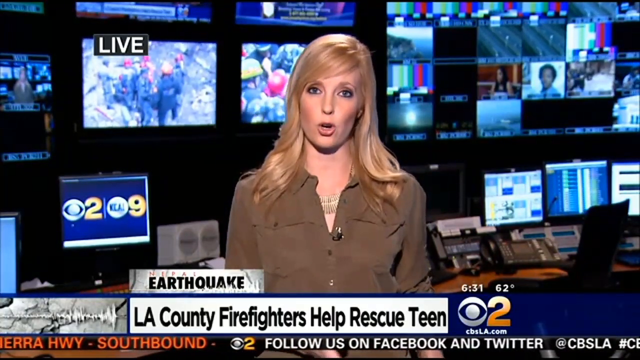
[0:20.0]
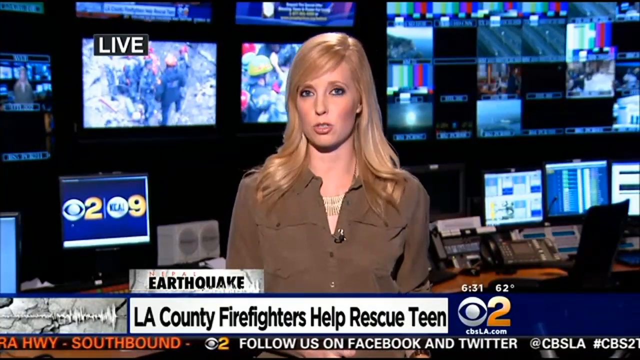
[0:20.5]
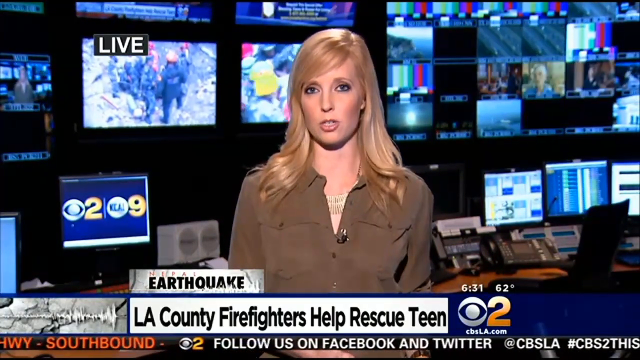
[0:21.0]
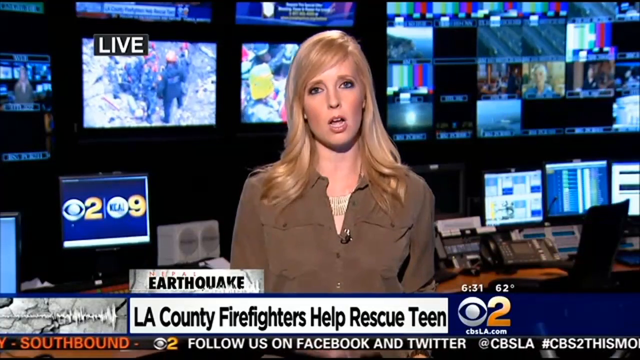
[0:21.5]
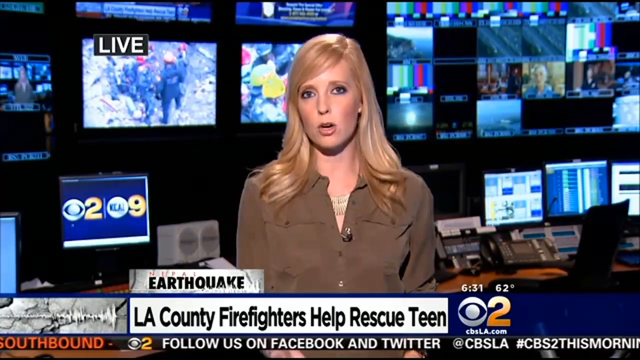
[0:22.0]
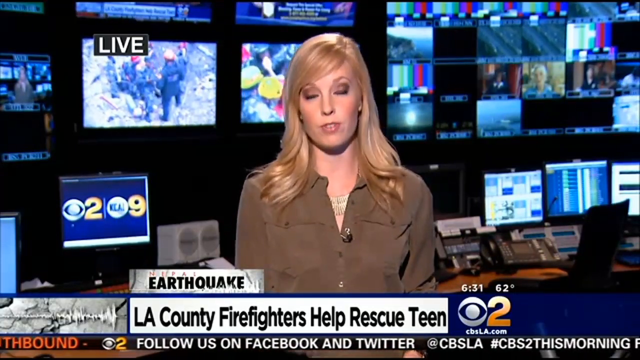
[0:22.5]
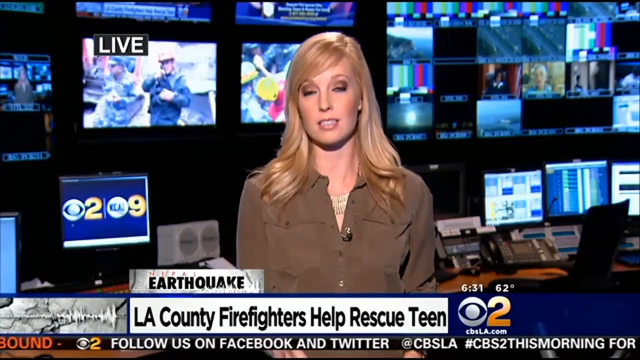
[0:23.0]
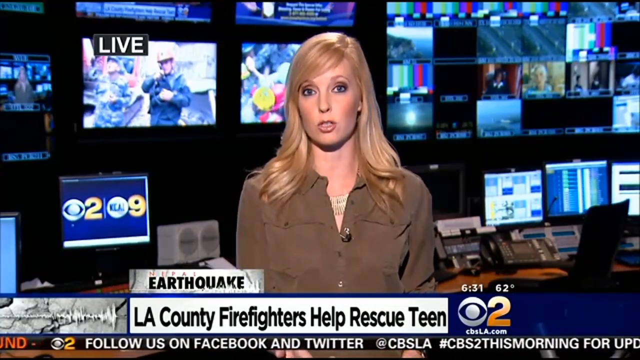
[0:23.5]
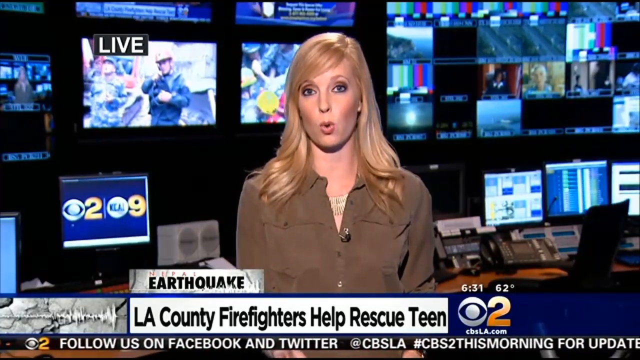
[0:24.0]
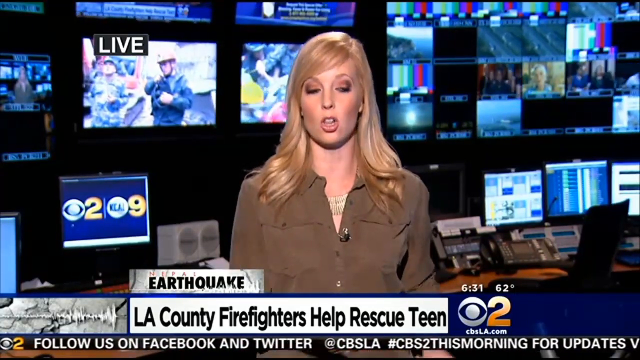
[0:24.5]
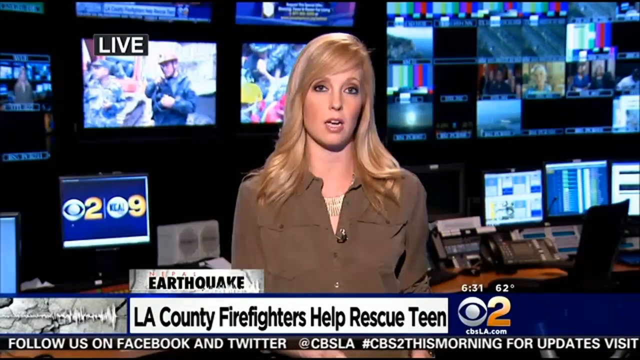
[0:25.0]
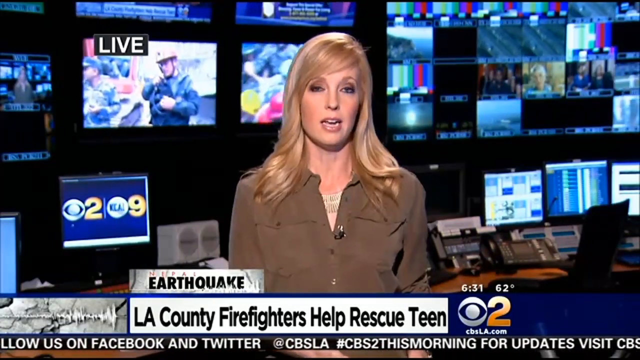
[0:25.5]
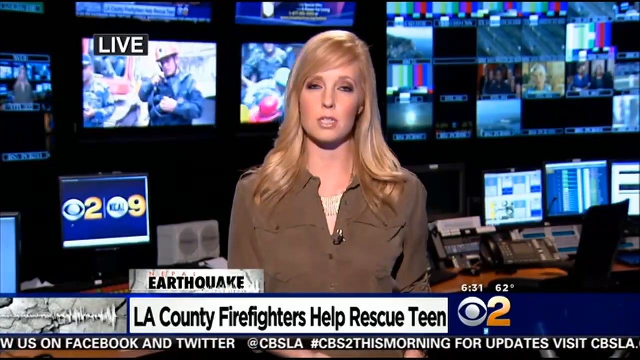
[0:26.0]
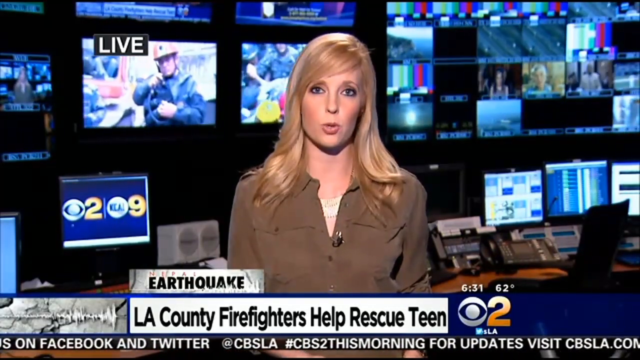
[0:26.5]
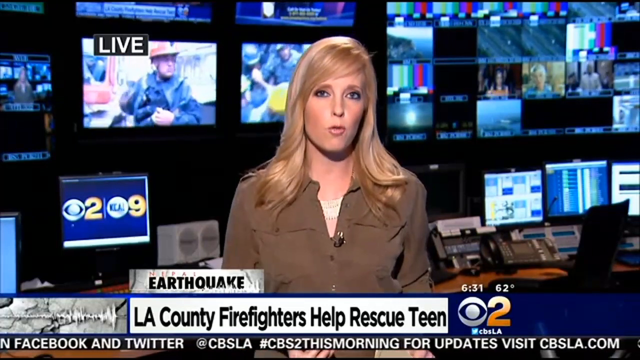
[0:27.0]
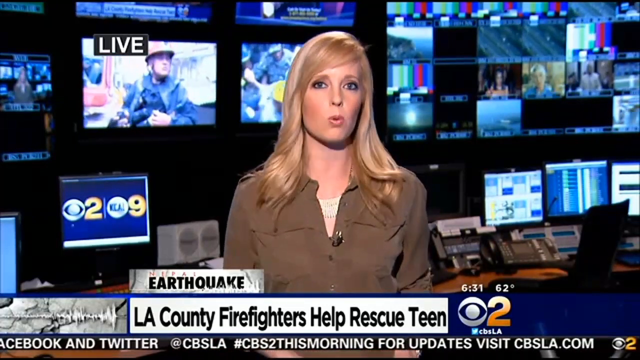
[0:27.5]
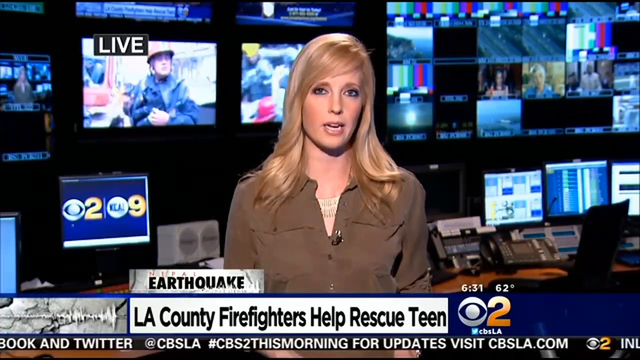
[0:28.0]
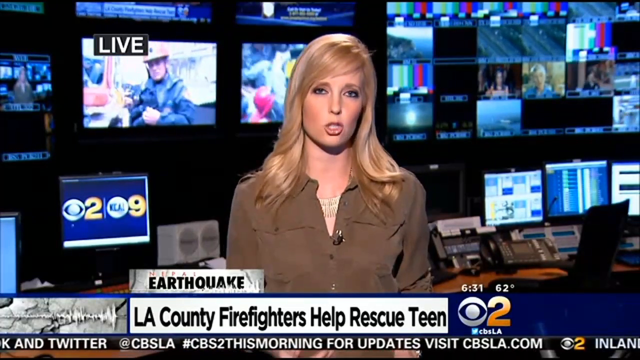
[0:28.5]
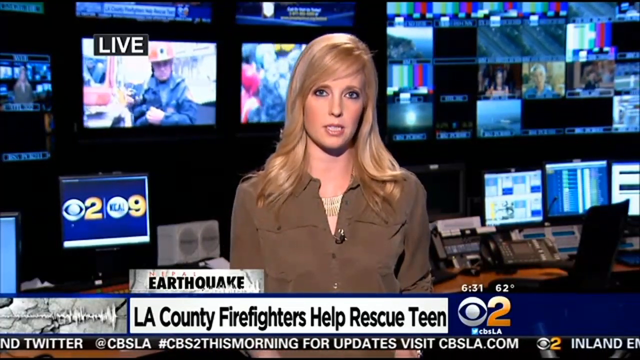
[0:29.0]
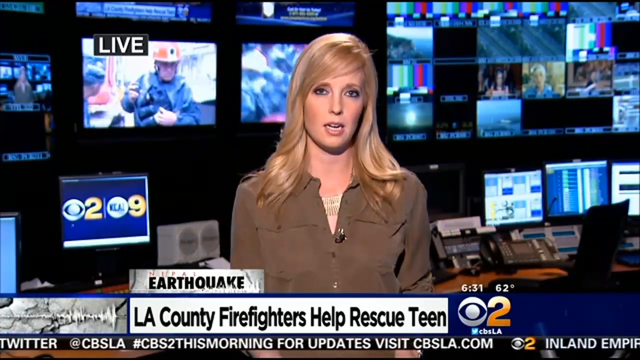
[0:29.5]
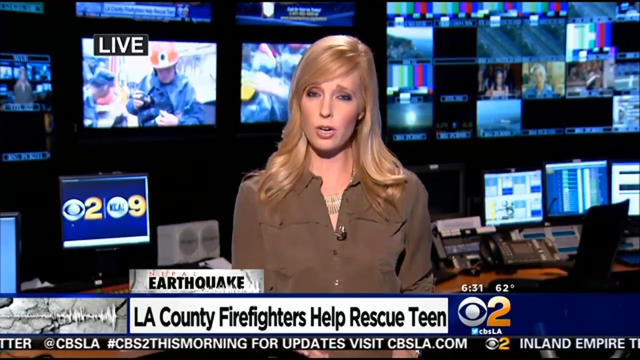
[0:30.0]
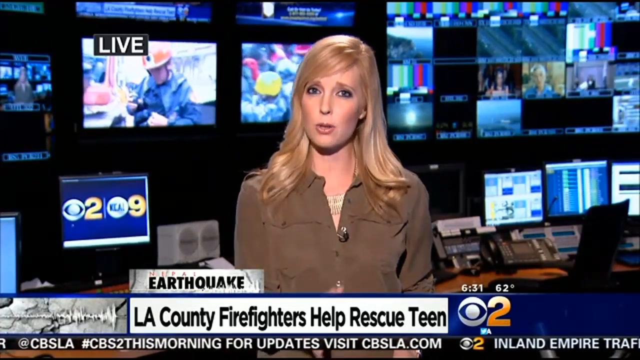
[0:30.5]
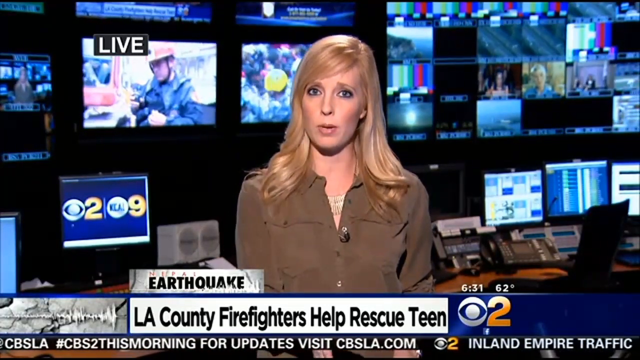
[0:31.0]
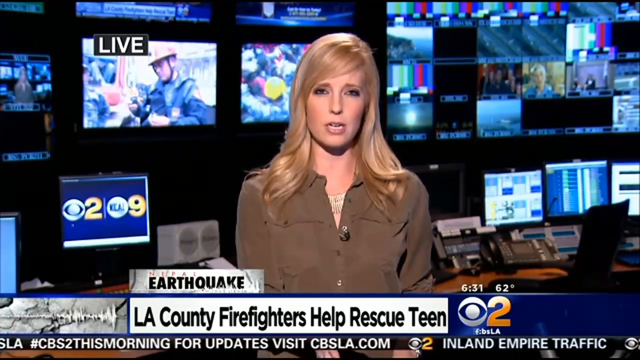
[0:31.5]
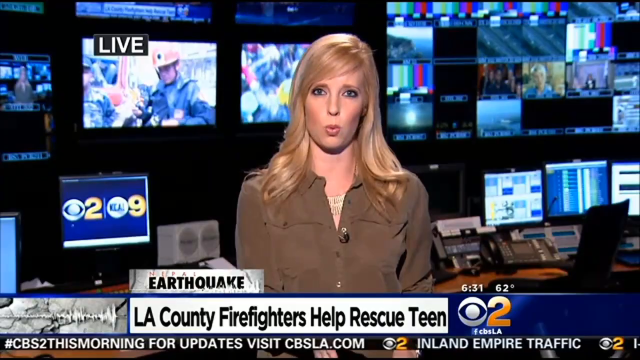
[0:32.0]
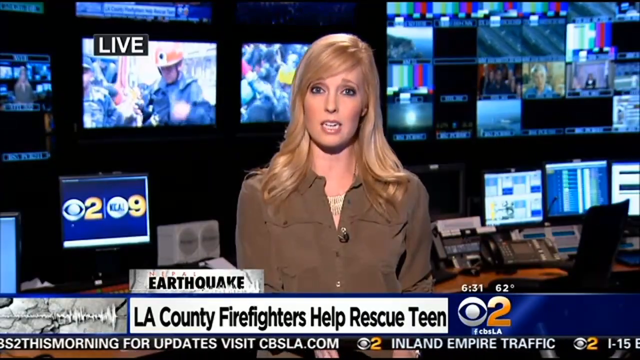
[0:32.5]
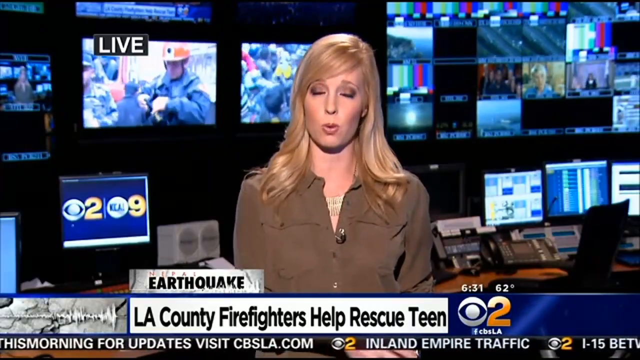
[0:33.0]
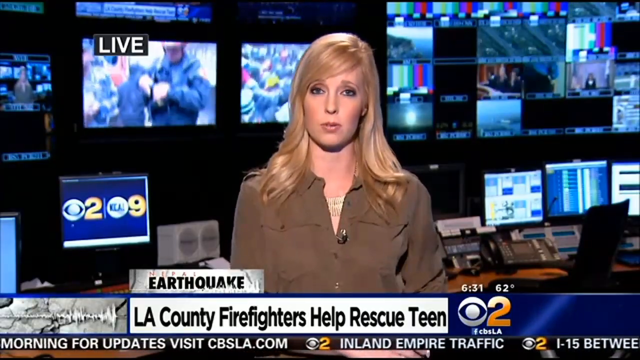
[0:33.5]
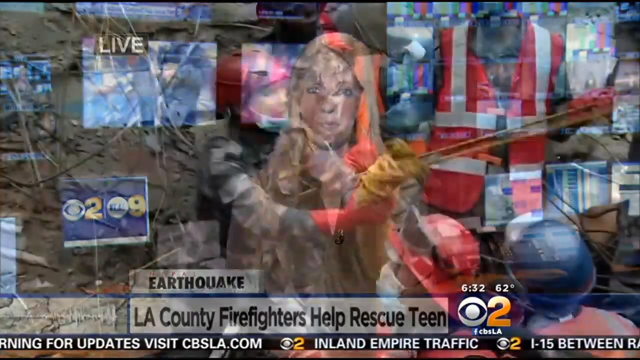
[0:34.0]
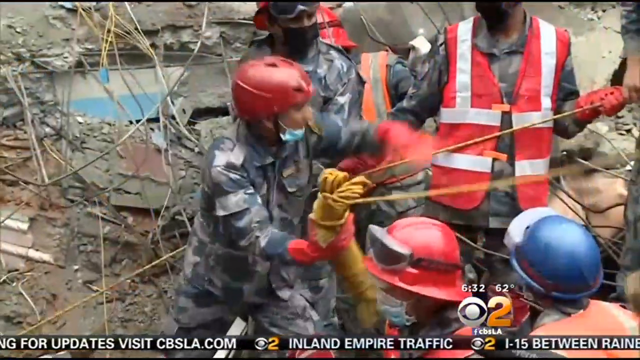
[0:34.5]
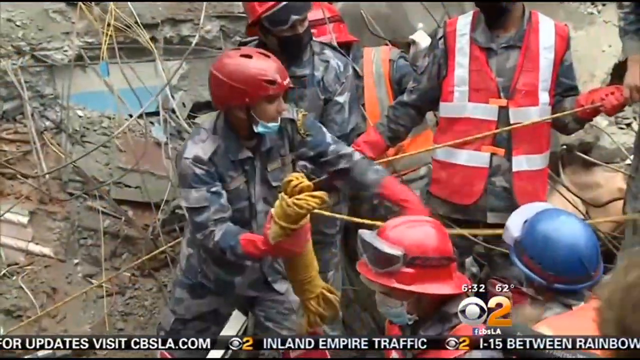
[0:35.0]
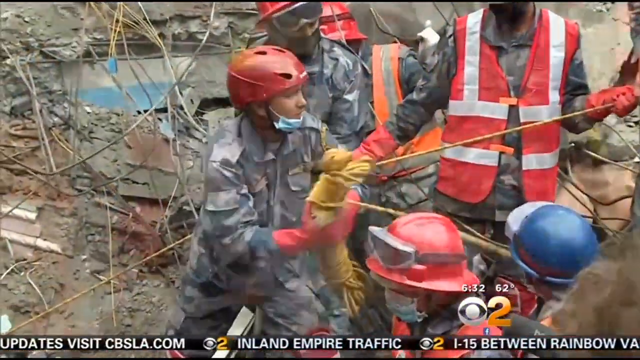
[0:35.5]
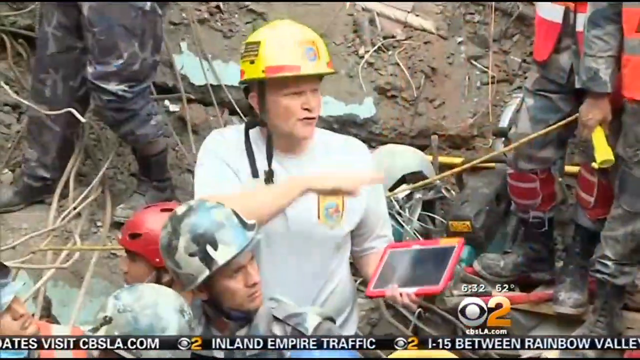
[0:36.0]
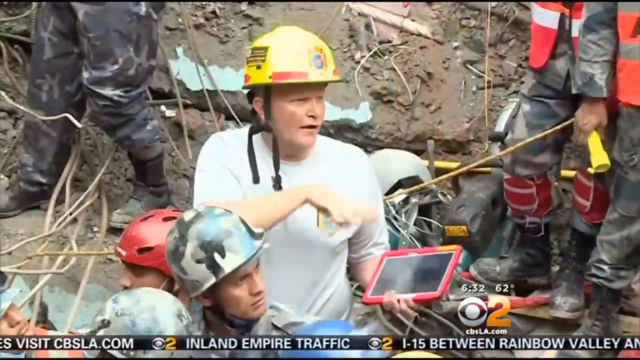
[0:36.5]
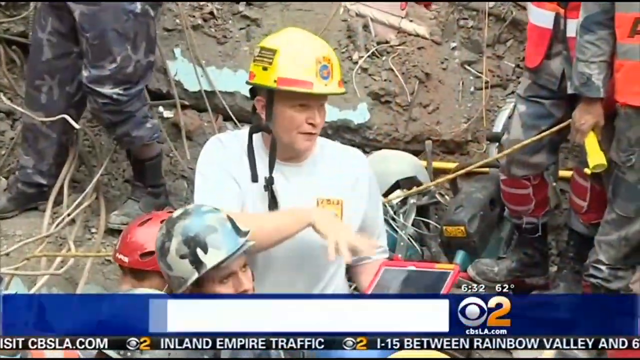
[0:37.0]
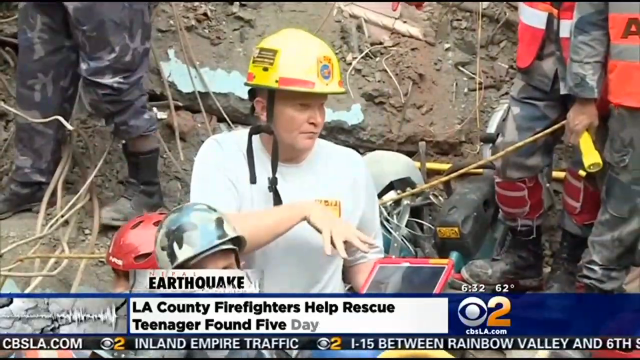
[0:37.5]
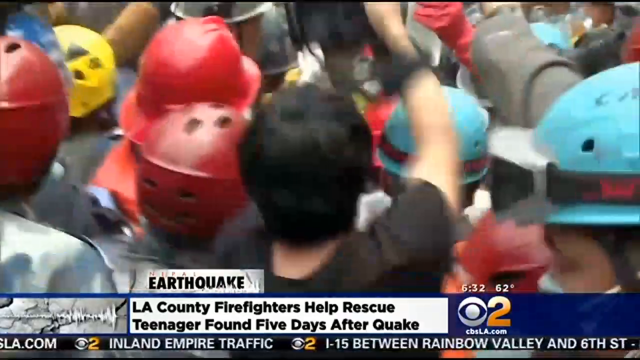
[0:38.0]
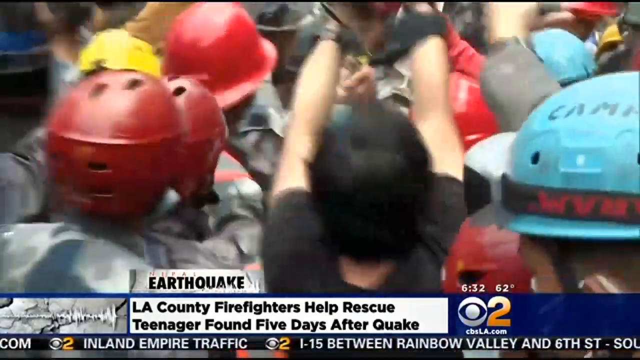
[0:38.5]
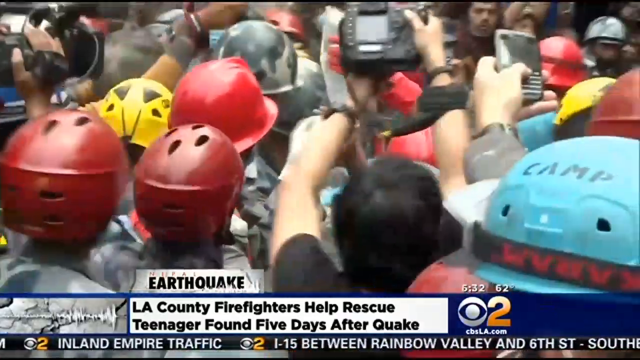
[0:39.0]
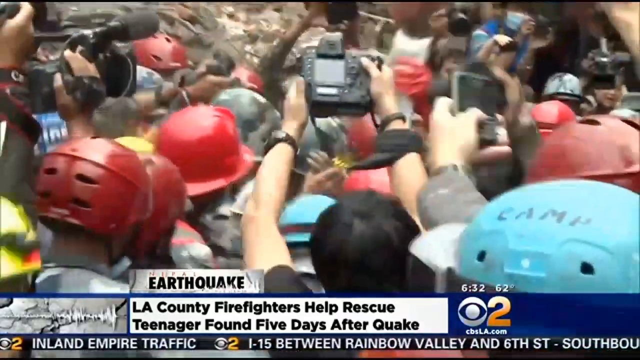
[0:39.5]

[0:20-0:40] A reporter is standing in a newsroom. In the upper left-hand corner of the screen is the word "LIVE" in capital letters. A screen shows the CBS logo with the numbers "209." The reporter standing in front of the camera is a white woman with long blonde hair and a brown button-up shirt. Below her is the headline "EARTHQUAKE, LA COUNTY FIREFIGHTERS HELP RESCUE TEAM." She is talking to the camera. The scene changes to a rescue in an outside setting, where five men hold a bundle of yellow rope. One of the men wears a red and white vest, and all of them wear helmets or hard hats. Next, a white man in a yellow hard hat and a white t-shirt holds an iPad in his left hand and gestures with his right hand. Below him is the headline "EARTHQUAKE, LA FIREFIGHTERS HELP RESCUE TEENAGER FOUND FIVE DAYS AFTER EARTHQUAKE."